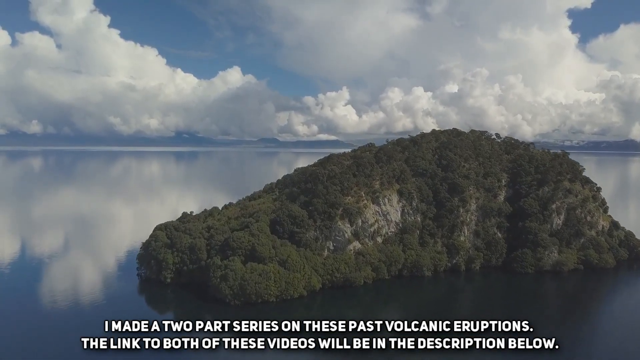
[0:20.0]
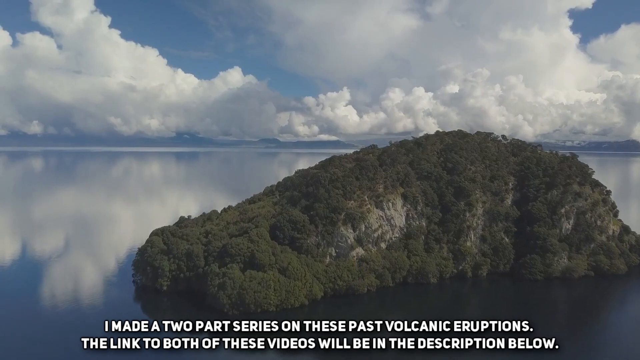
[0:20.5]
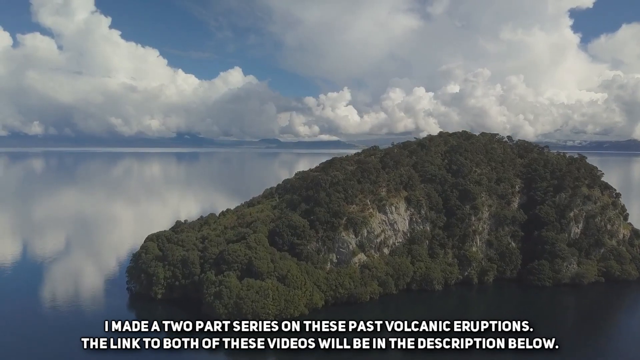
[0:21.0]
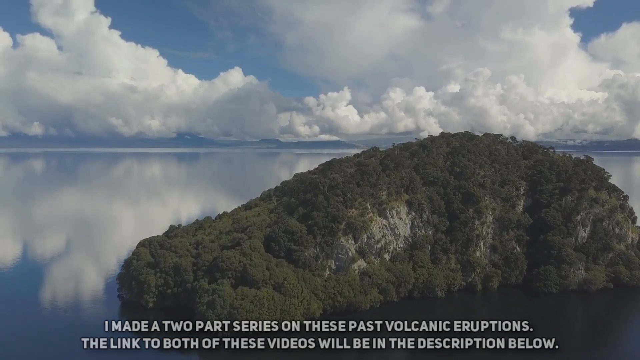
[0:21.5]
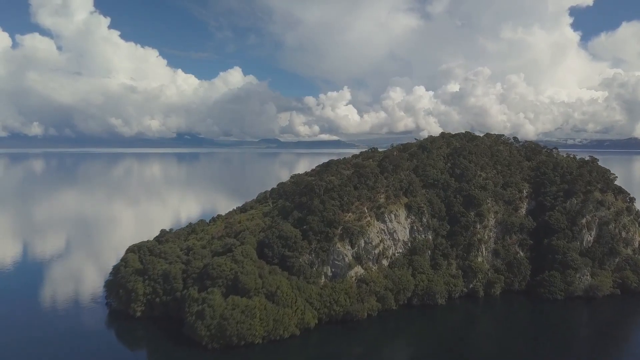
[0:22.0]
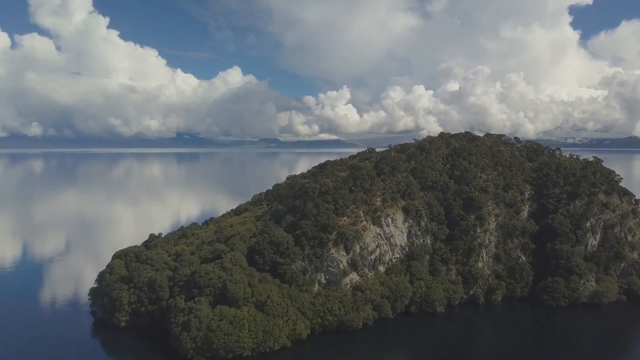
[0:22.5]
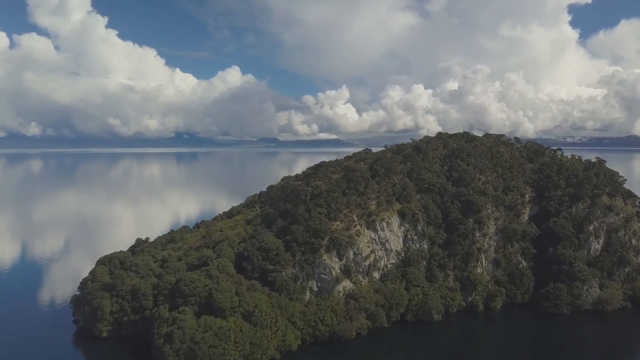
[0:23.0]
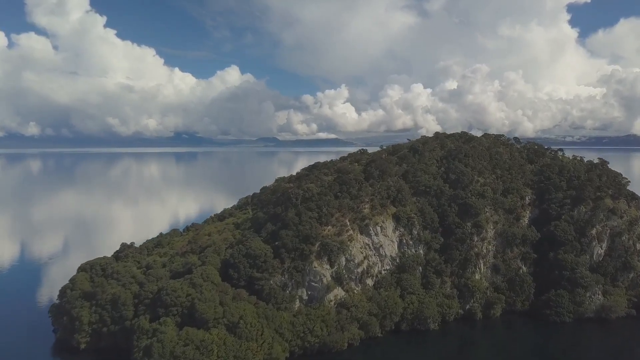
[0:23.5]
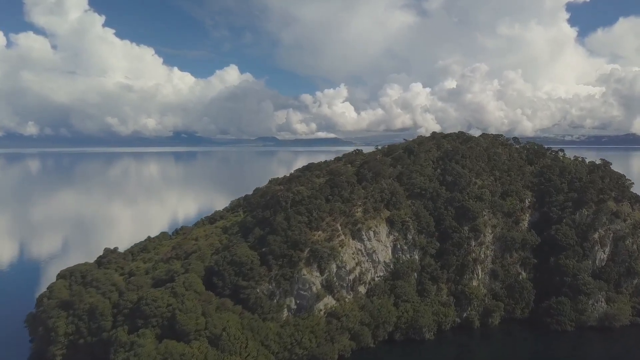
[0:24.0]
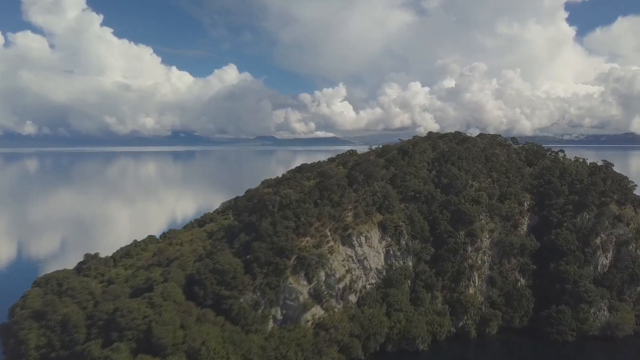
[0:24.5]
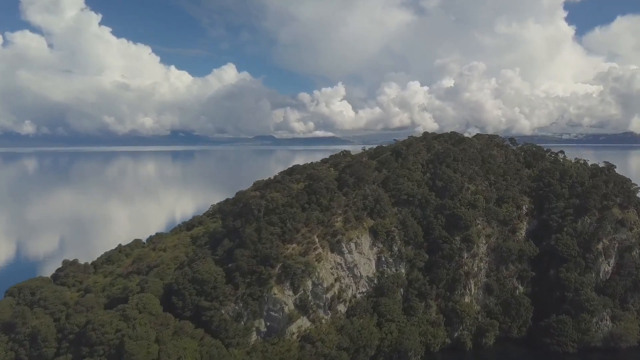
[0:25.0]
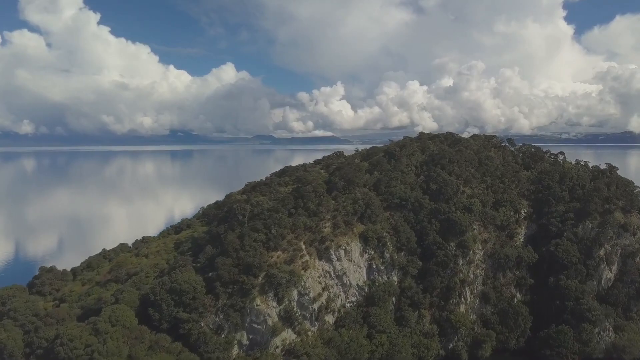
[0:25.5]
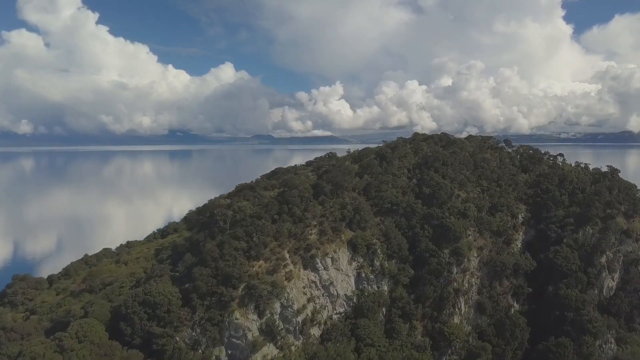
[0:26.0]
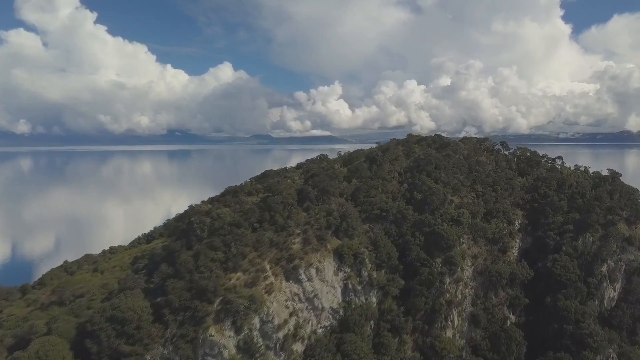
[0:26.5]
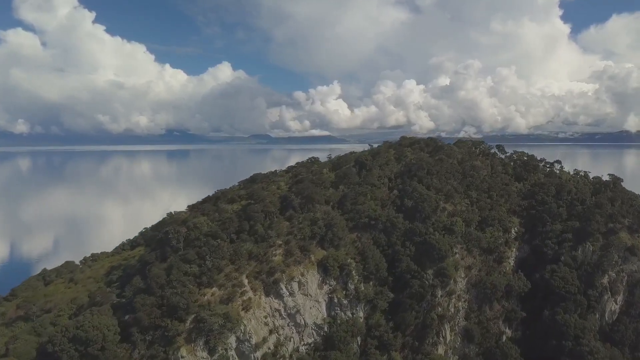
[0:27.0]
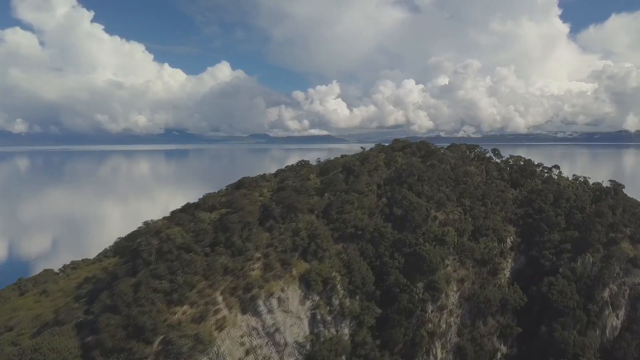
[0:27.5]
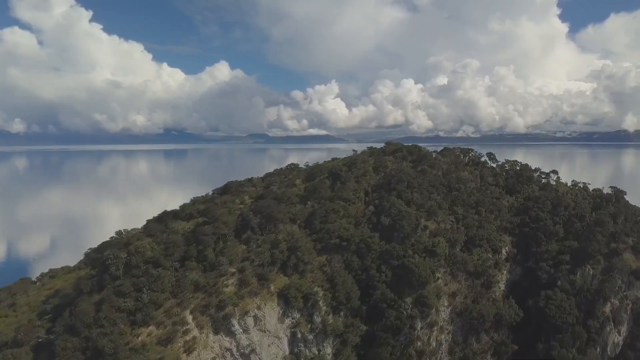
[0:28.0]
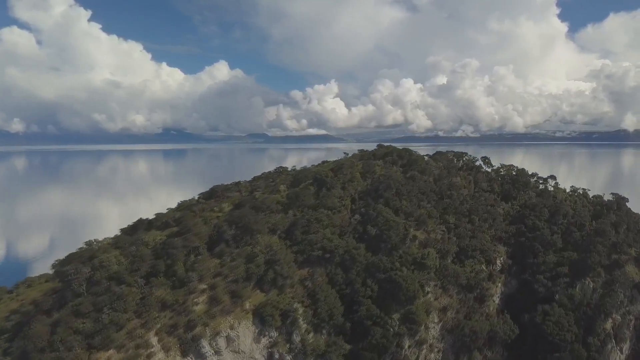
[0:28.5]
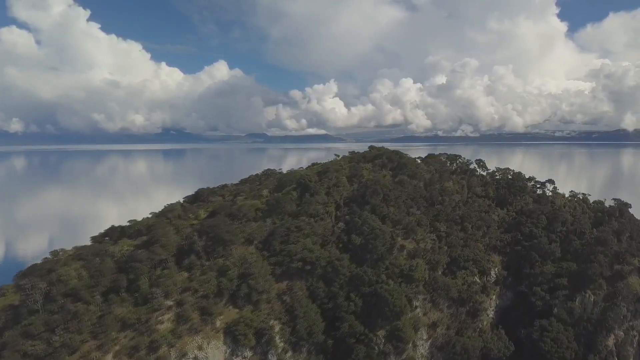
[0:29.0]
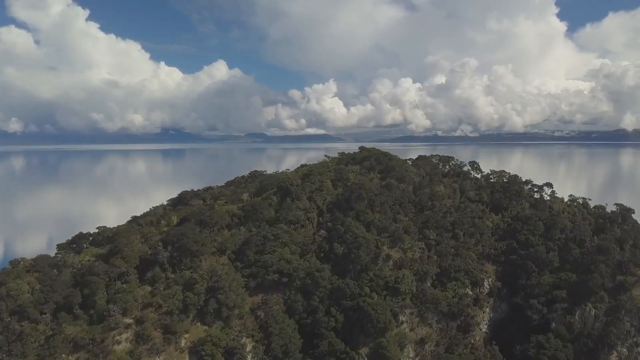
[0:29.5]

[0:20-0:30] A flyover shot of Taupo volcano begins. Text at the bottom of the frame reads "I made a two-part series on these past volcanic eruptions the link to both of these videos will be in the description below". The shot of the volcano lingers as the camera drifts over it. The ocean surrounds the top of the volcano, and a large number of cumulus clouds and blue skies are in the background.